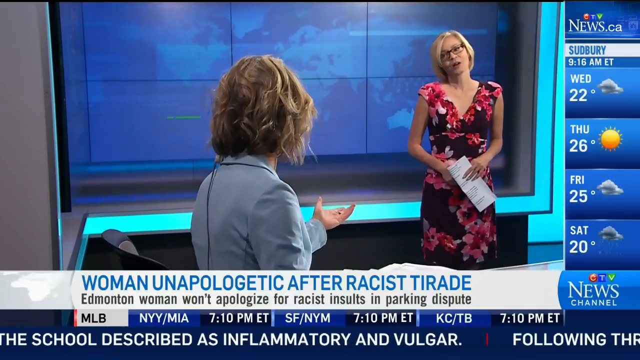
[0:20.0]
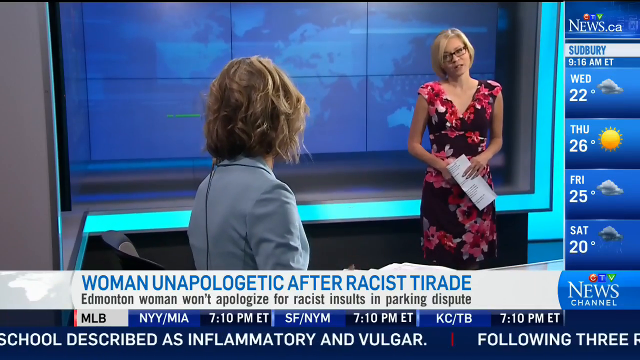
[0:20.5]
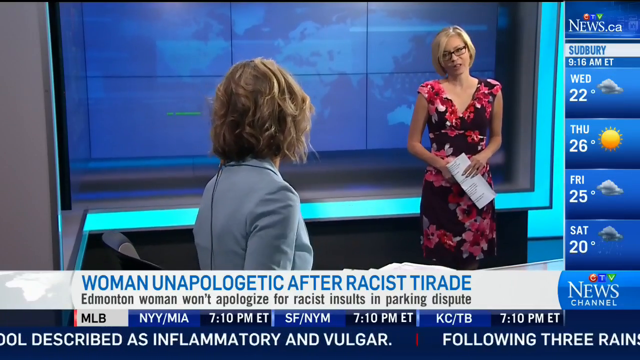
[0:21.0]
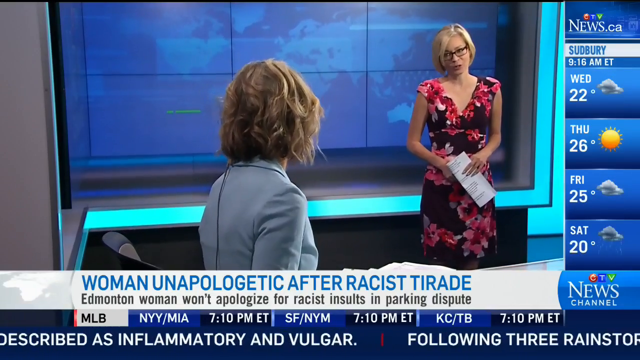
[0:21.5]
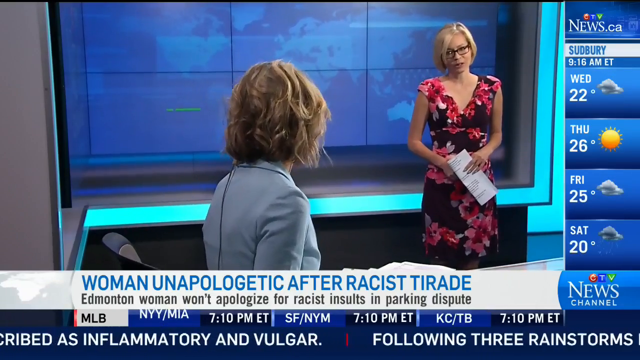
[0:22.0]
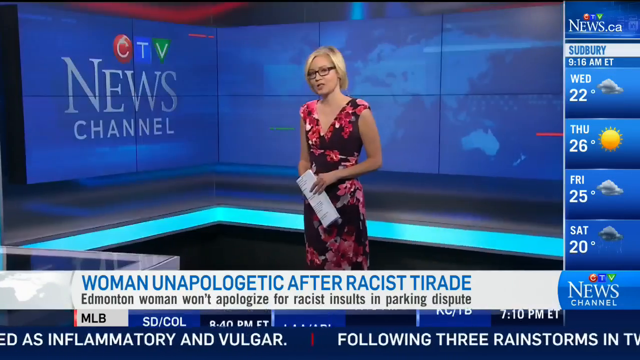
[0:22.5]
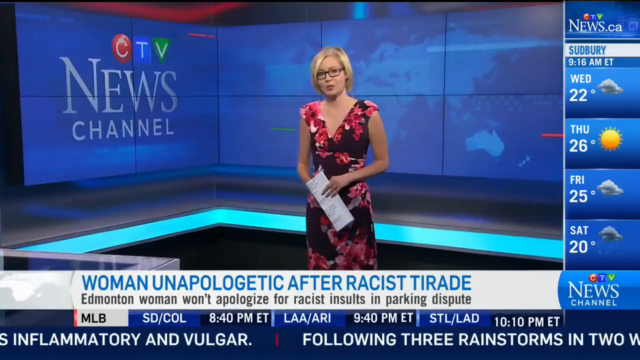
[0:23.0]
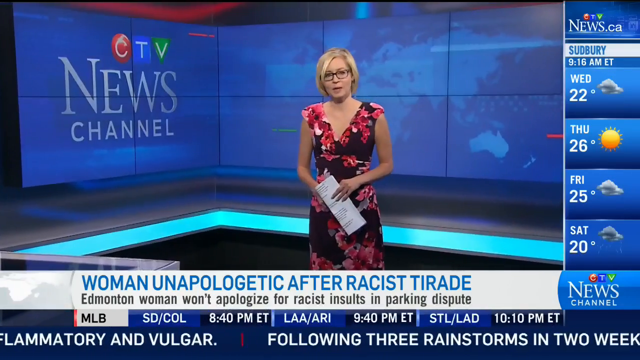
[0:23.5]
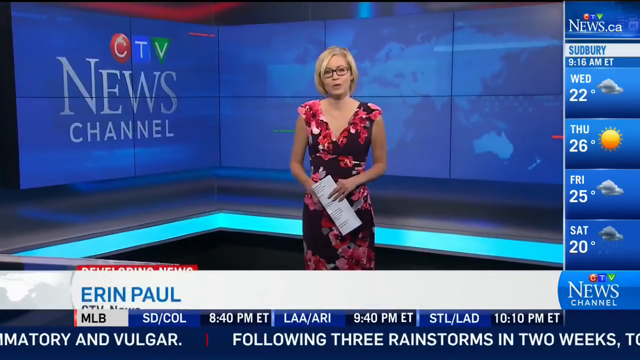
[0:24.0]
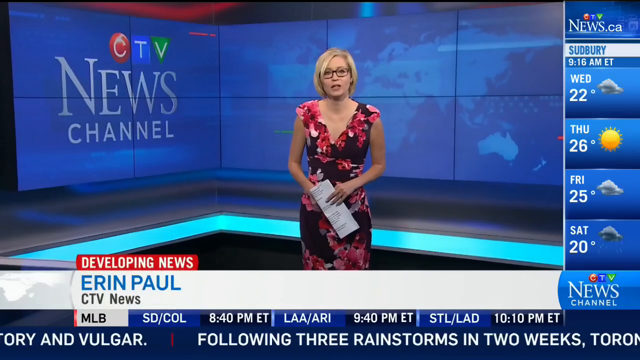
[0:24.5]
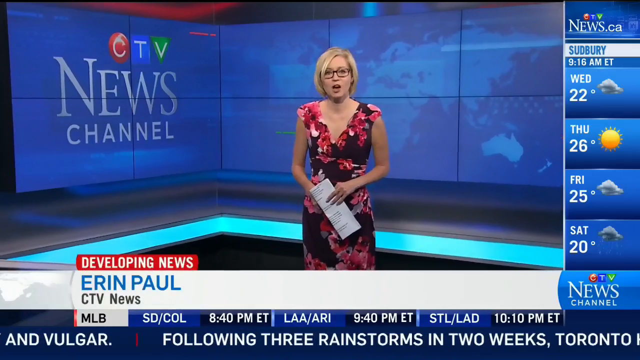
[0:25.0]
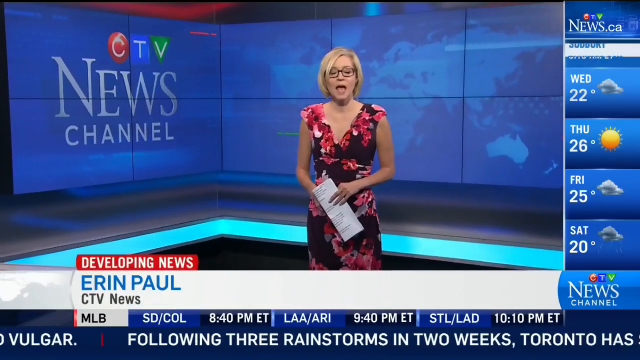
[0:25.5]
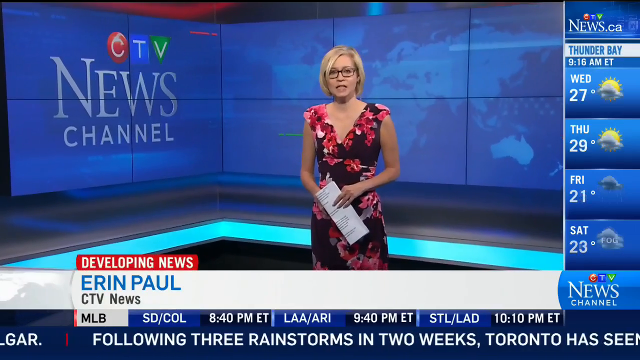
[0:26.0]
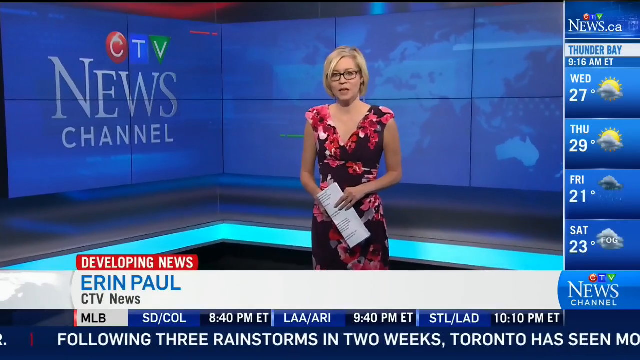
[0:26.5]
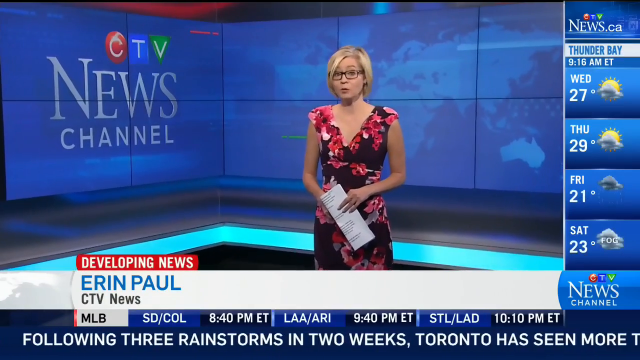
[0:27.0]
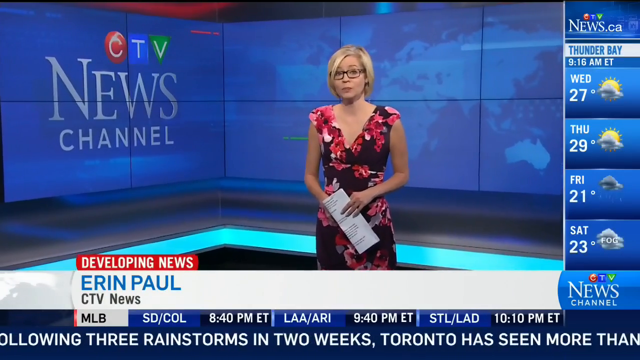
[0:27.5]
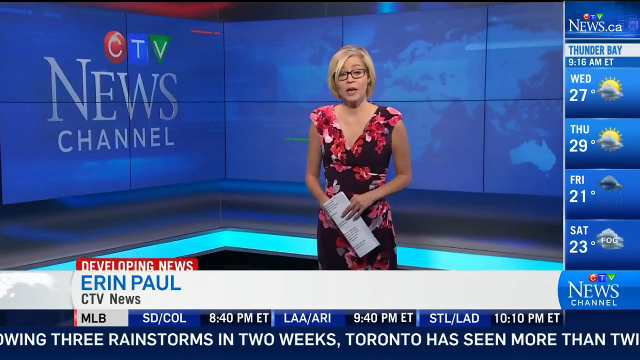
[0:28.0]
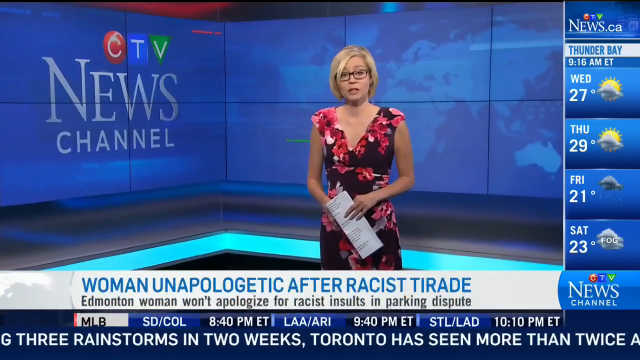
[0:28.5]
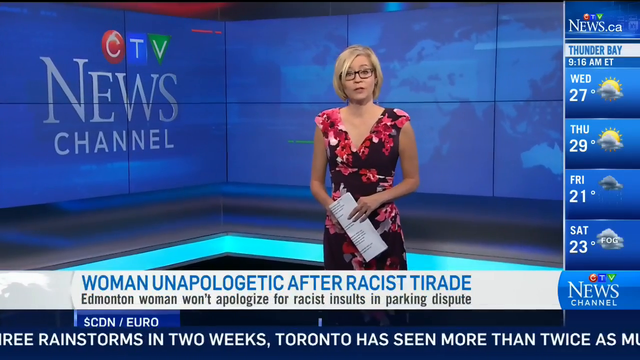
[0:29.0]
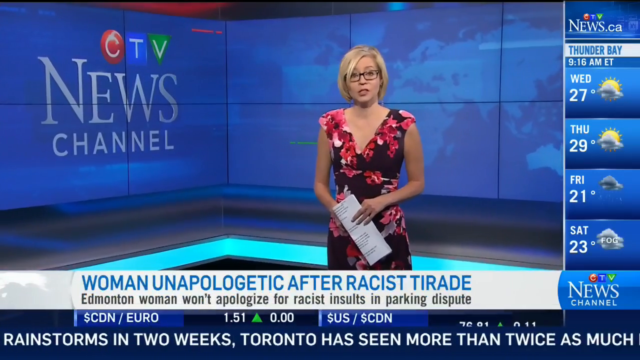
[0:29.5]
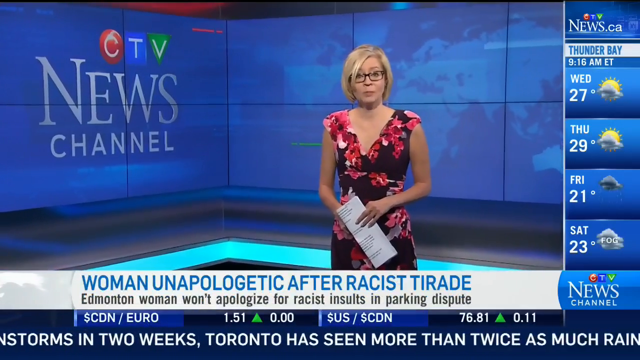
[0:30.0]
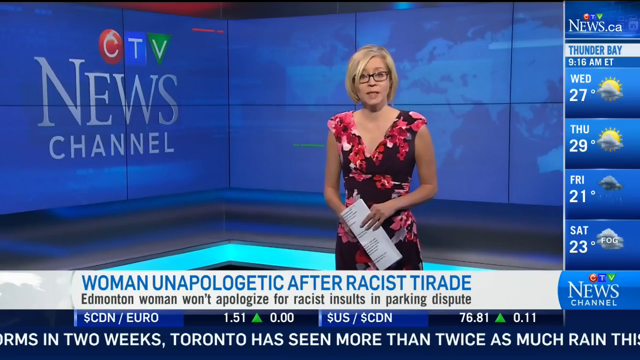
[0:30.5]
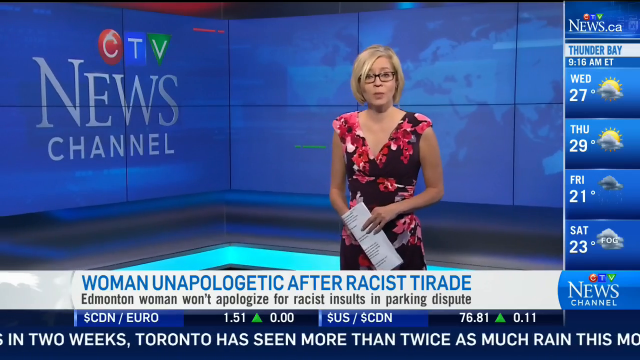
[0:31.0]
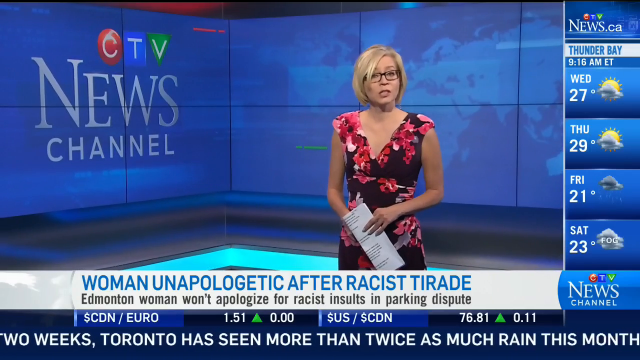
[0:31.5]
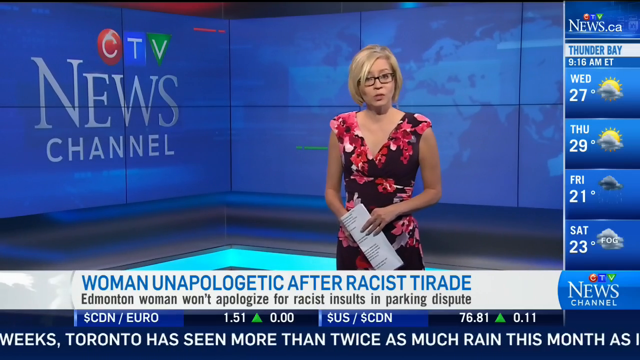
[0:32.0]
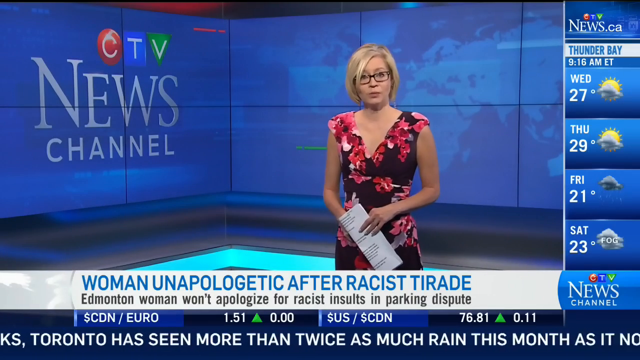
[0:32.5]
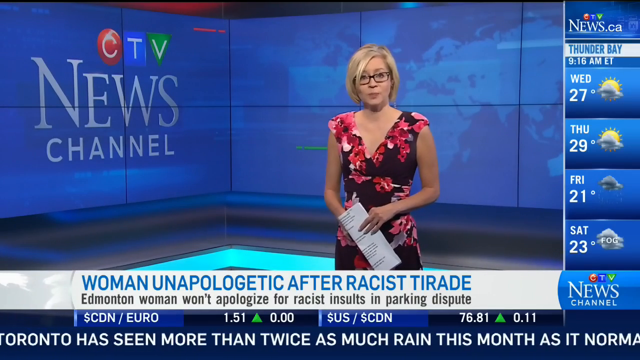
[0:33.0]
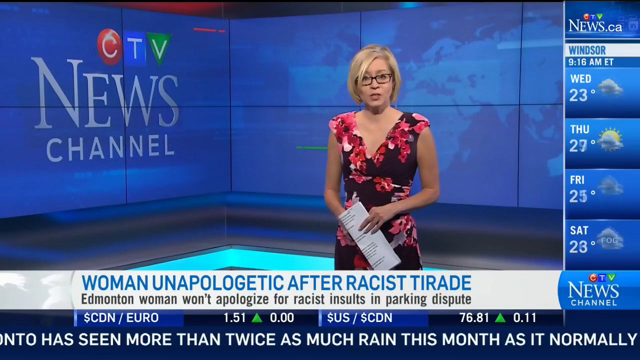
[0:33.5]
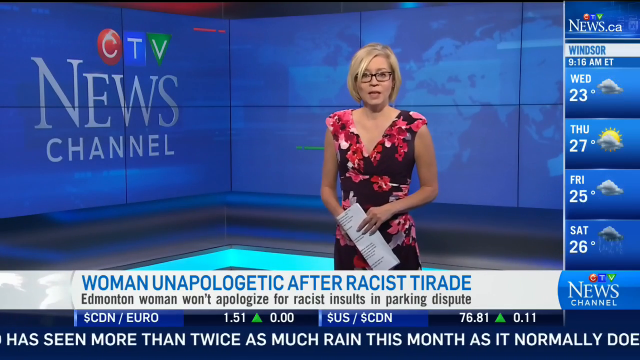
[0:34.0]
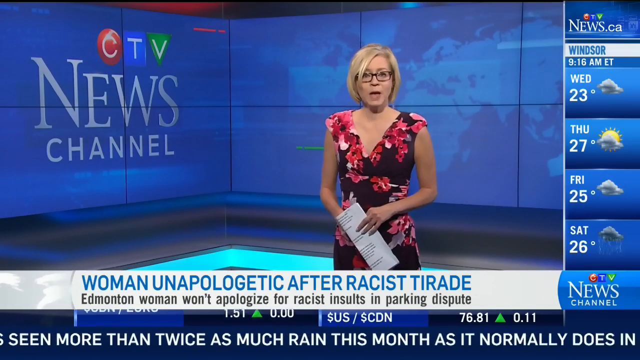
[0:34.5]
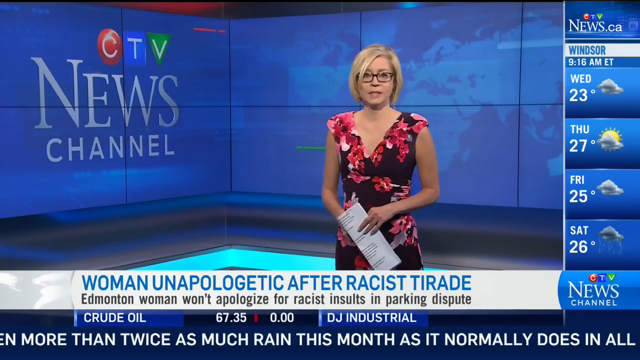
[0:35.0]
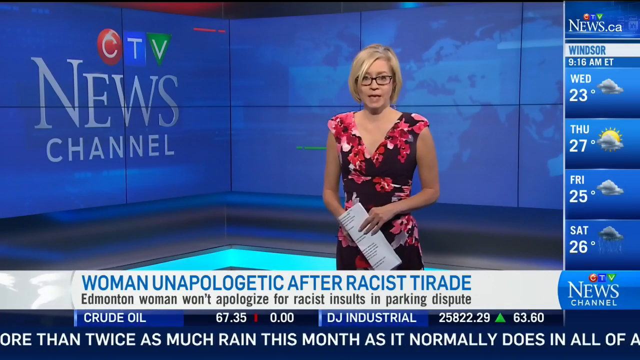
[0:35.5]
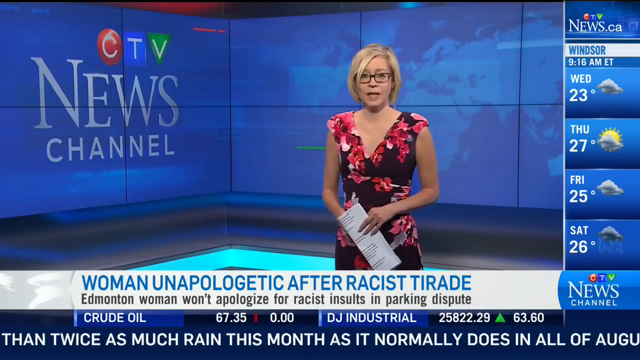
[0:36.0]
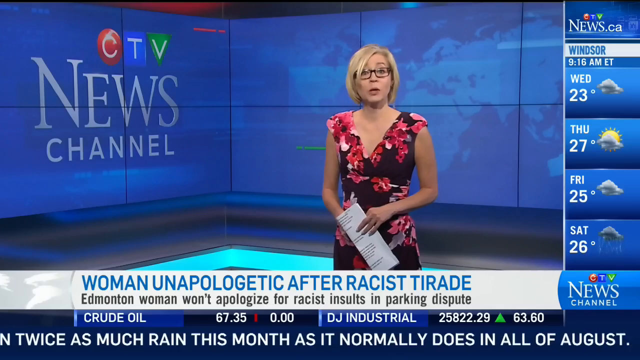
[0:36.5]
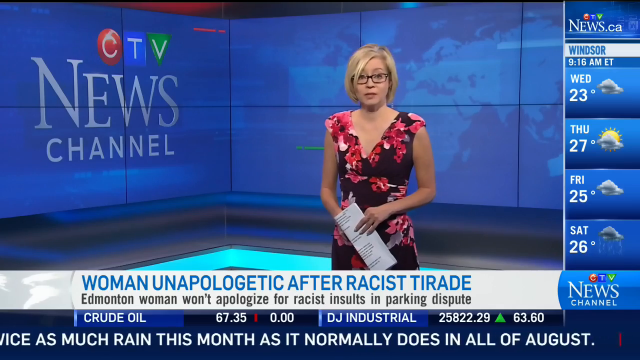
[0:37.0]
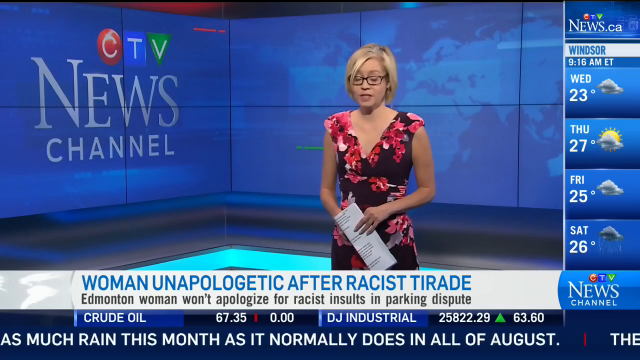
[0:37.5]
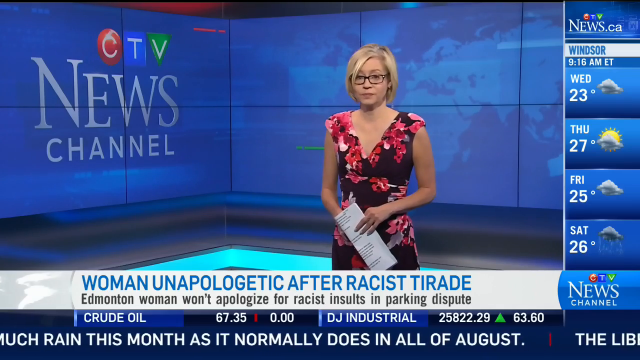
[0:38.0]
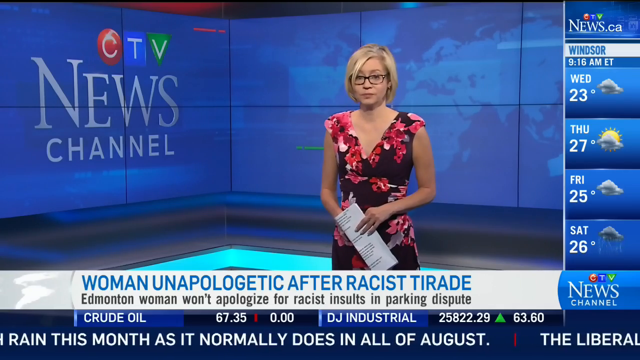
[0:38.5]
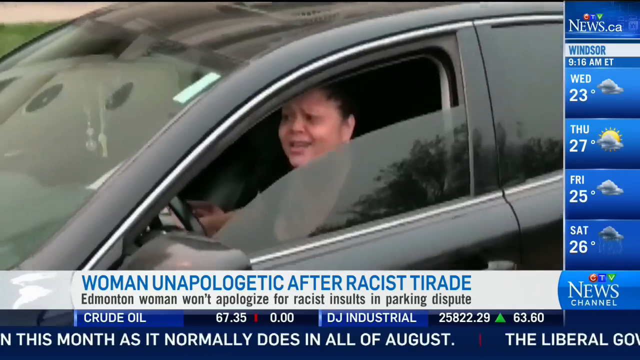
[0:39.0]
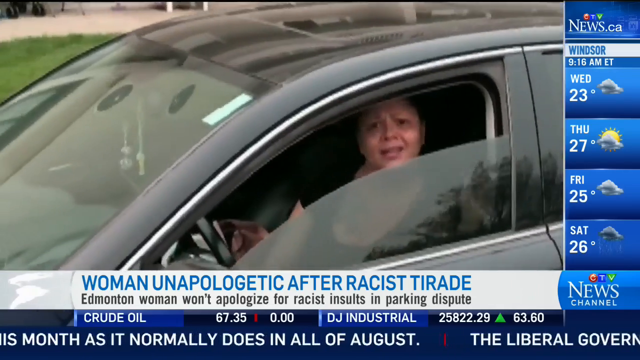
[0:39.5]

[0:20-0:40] Another female news presenter is introduced. She wears a long sleeveless dress that kind of has a flower pattern and looks a little pink and red in color, along with glasses and a short haircut. She holds some type of document in her left hand. Text below her reads "Developing News, Aaron Paul, CTV News," and other information is shown in the area below. Monitors in the background read "CTV News Channel," and panels apparently showing the world are faintly visible behind her. Information about the stock market and crude oil is displayed at the bottom. The presenter stands mostly stationary and does not move her arms. "CTV News Channel" also appears in the right-hand corner, apparently the channel's logo.